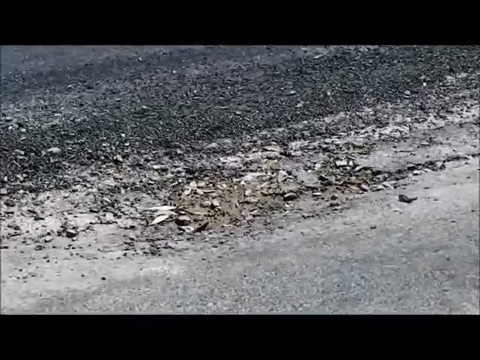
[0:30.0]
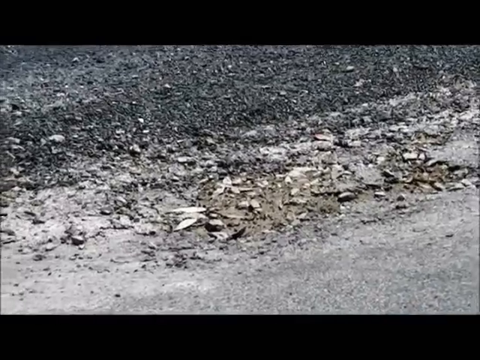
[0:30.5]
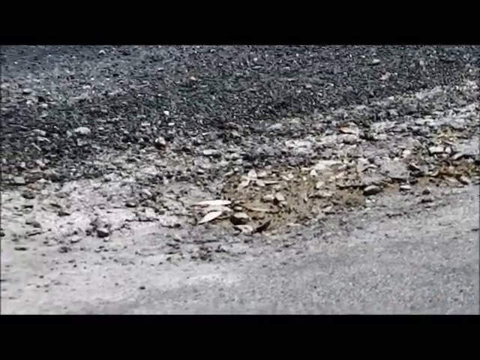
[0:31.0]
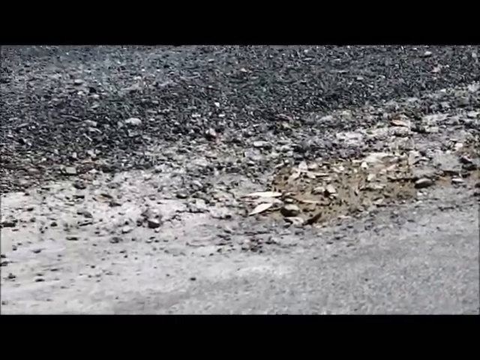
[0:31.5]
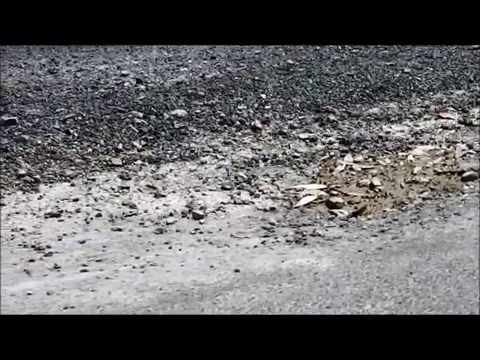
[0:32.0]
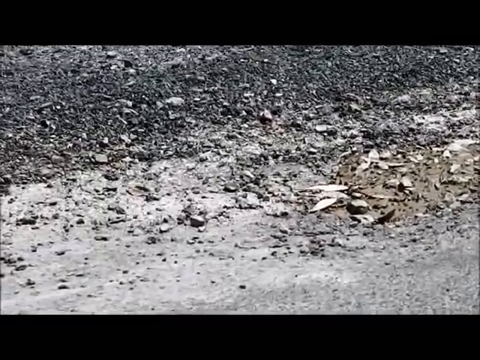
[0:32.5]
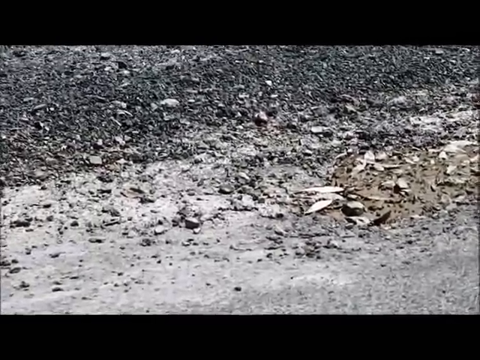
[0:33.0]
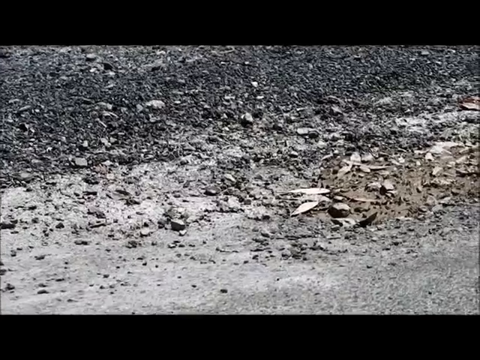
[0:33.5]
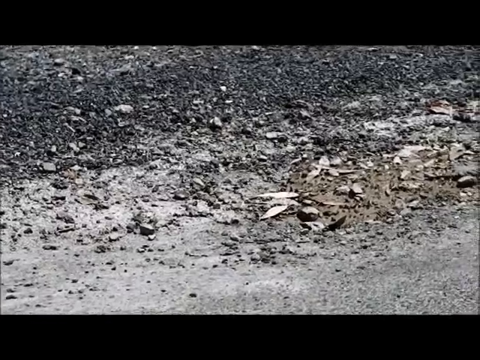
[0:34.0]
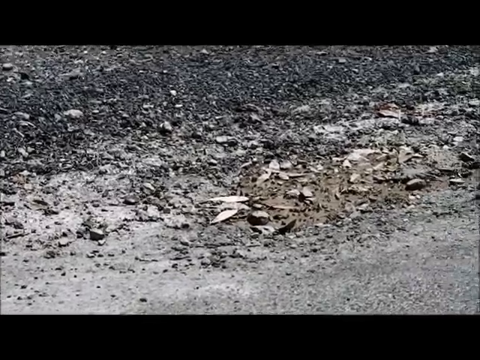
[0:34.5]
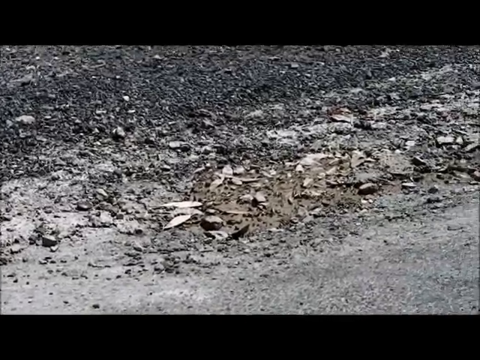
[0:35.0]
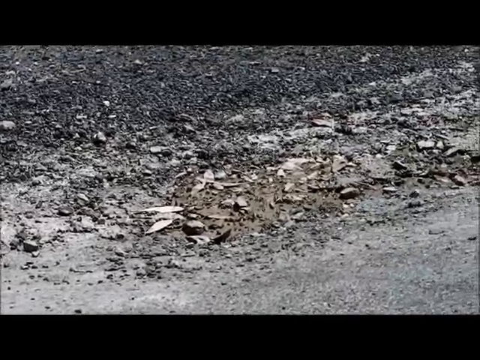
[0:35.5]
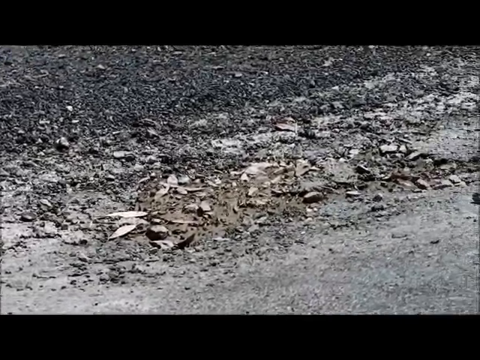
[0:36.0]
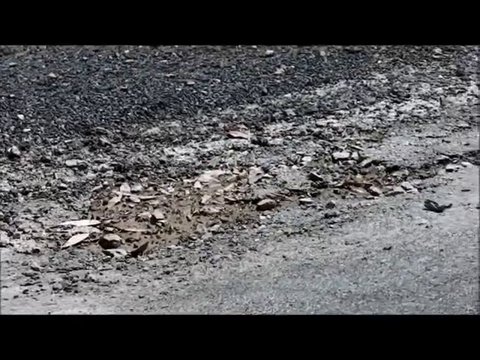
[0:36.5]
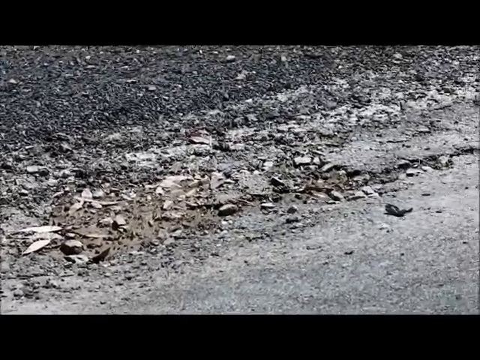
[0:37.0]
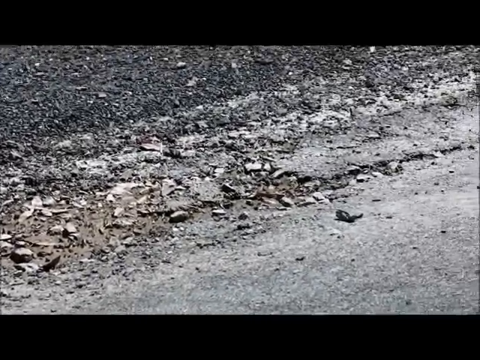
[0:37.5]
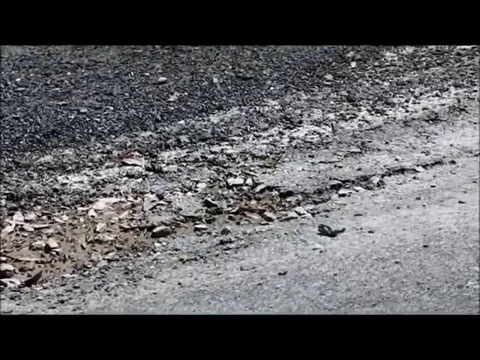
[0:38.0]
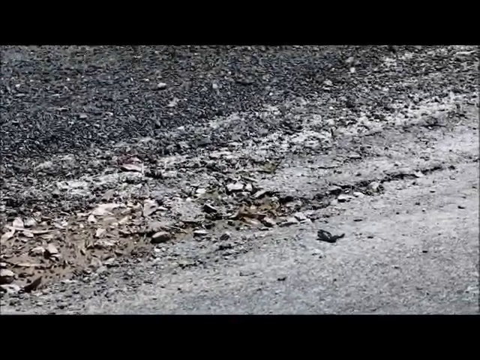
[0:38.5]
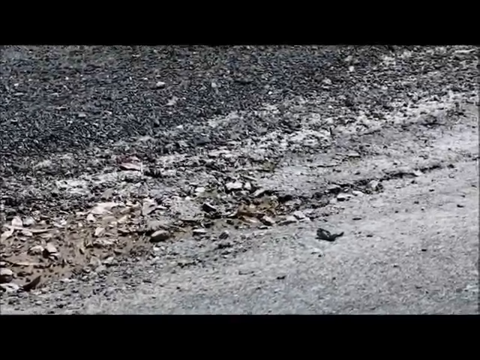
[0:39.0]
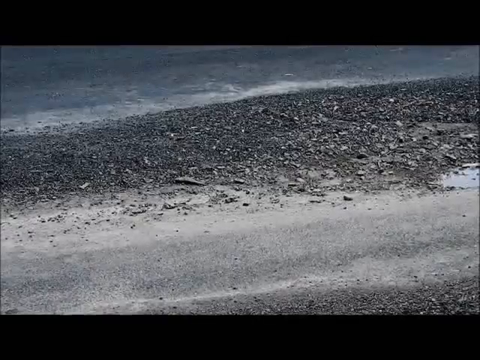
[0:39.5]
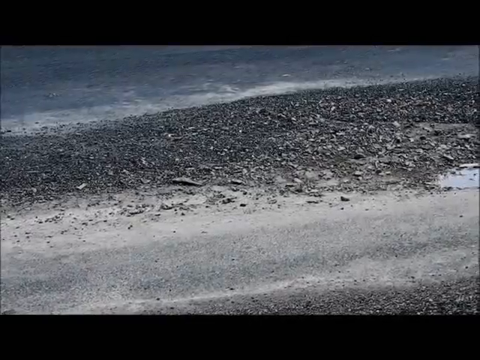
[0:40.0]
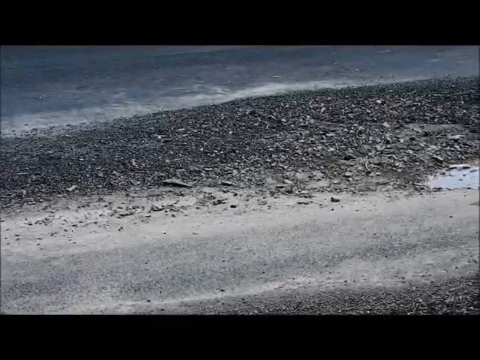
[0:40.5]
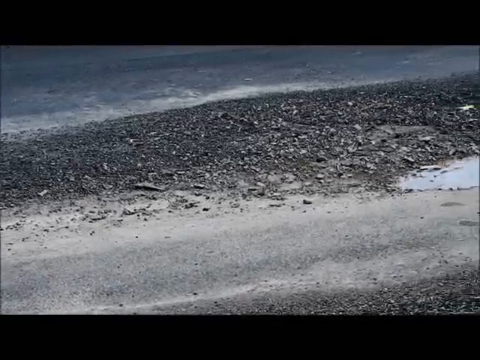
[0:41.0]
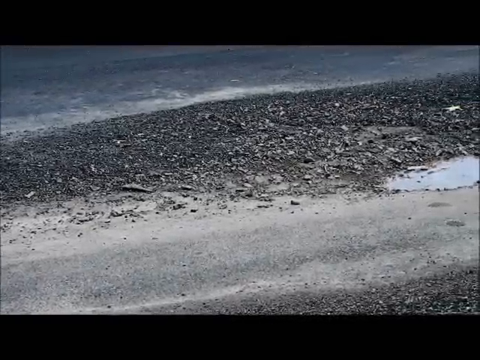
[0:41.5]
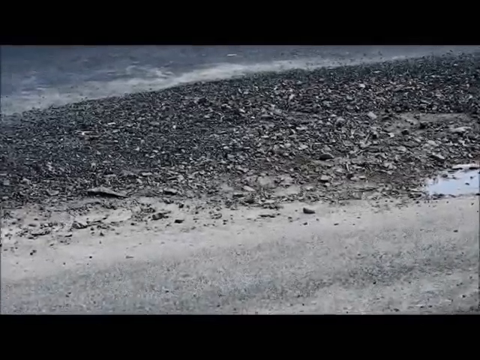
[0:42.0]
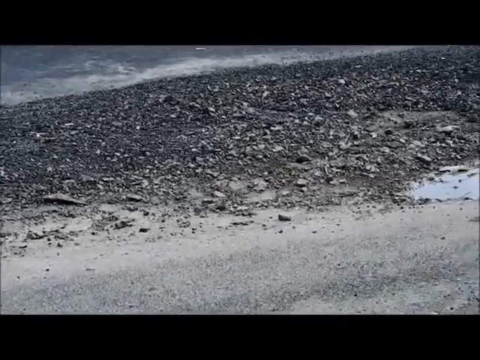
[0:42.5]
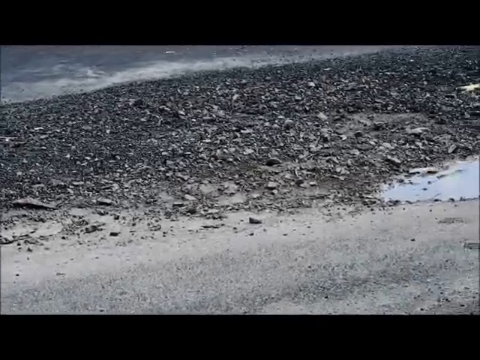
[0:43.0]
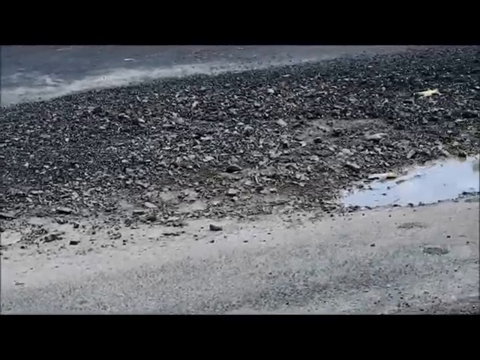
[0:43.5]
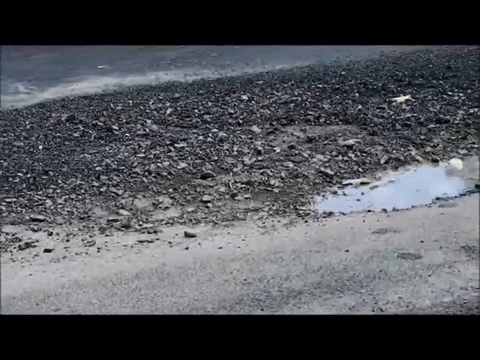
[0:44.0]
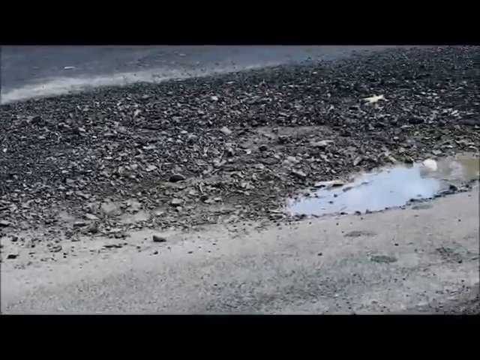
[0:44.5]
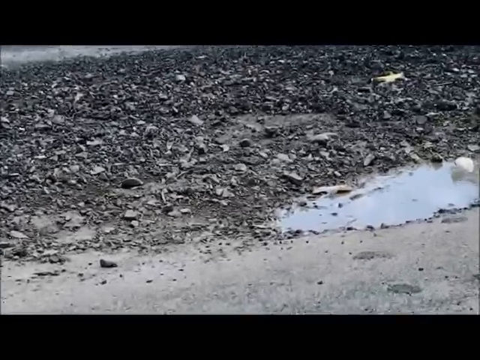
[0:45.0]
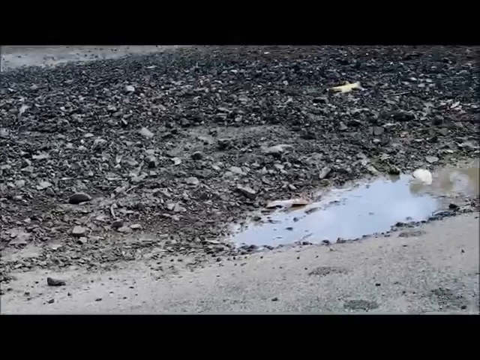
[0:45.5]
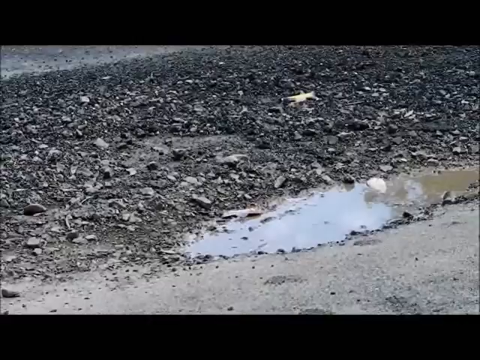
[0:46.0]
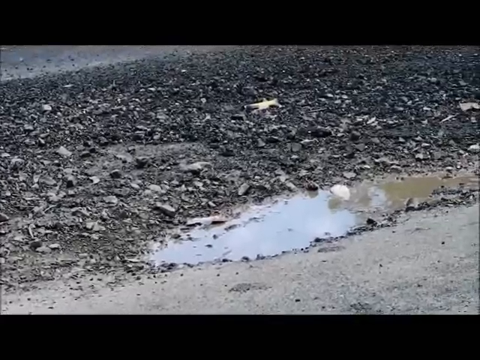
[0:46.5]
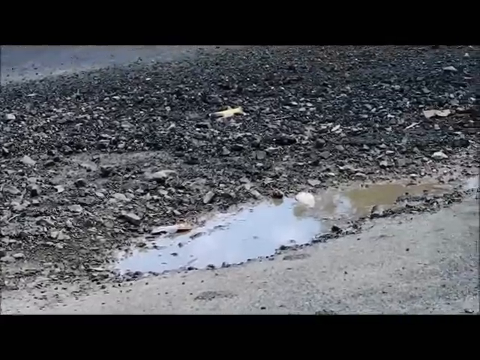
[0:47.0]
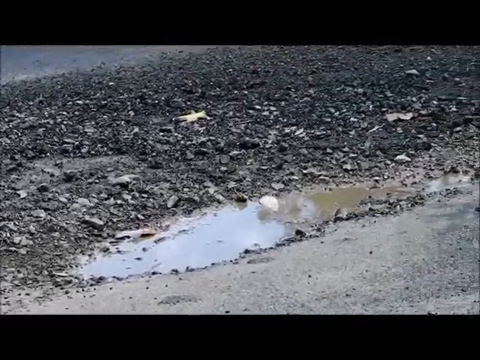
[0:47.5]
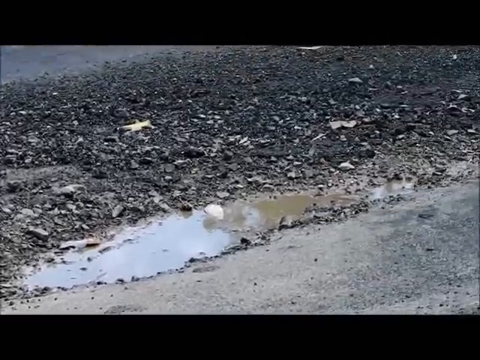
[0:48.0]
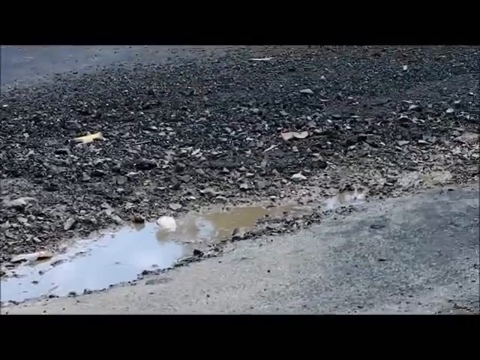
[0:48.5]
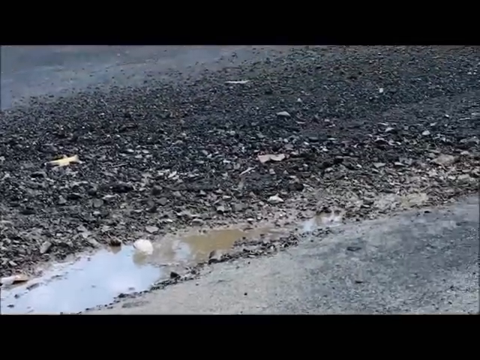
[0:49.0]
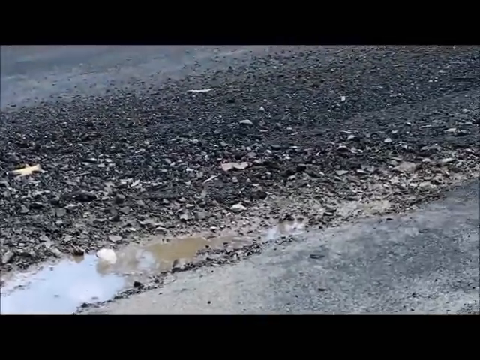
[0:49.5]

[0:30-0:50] The view zooms in very closely on the broken debris on the road, which looks like little broken chips or pieces of broken rock. The road itself is a very dark gray. The view shifts to the right as it scans the road and the broken debris, showing that the road is very damaged. A very large pothole with water in it appears, looking almost like a small pond of dark water. The view continues toward the upper right, where there are more broken chips and pieces of the road. The road's color ranges from kind of dark to light gray.